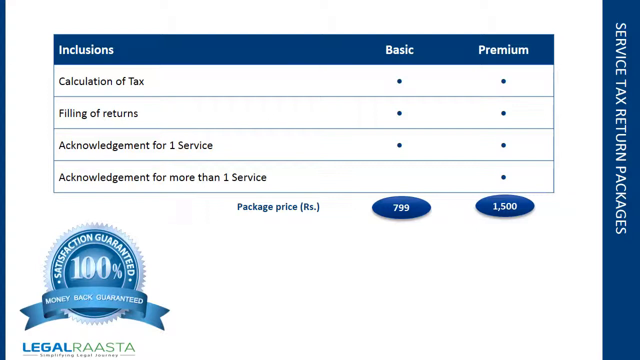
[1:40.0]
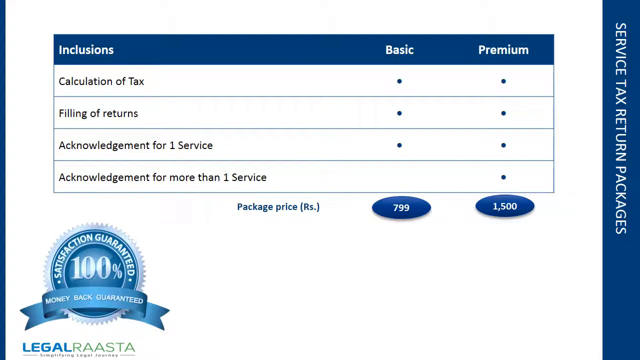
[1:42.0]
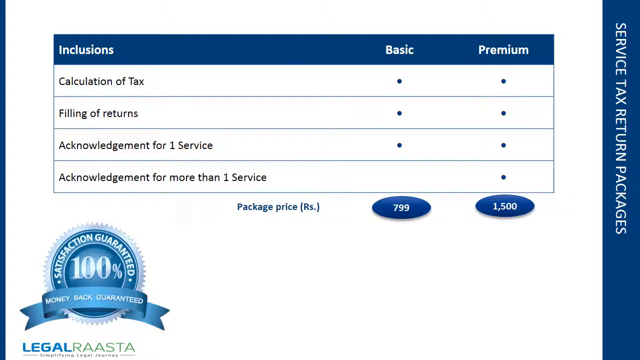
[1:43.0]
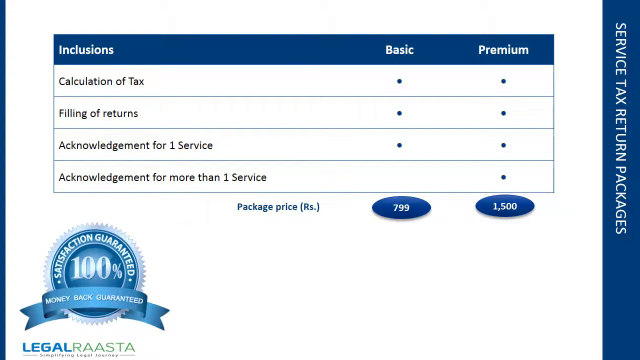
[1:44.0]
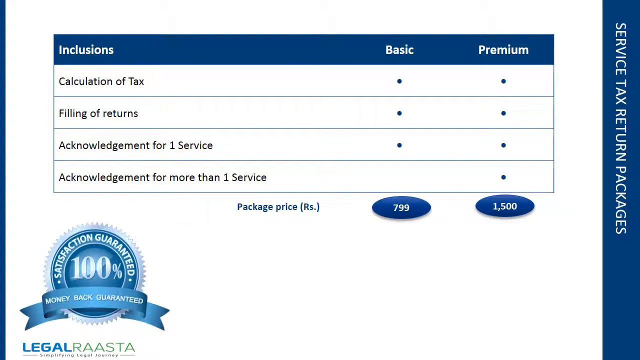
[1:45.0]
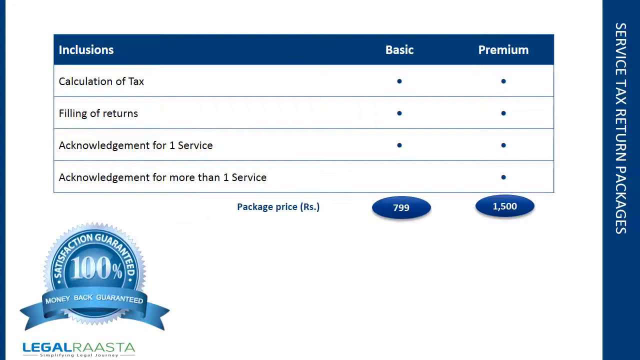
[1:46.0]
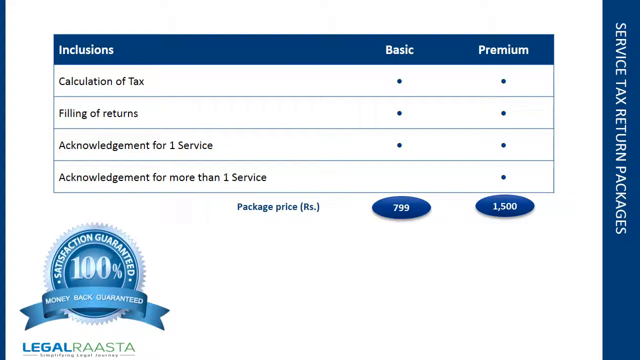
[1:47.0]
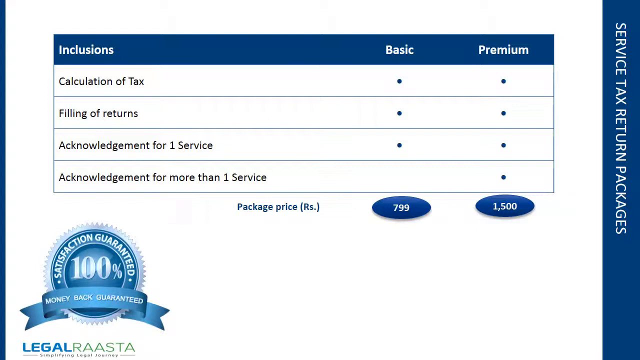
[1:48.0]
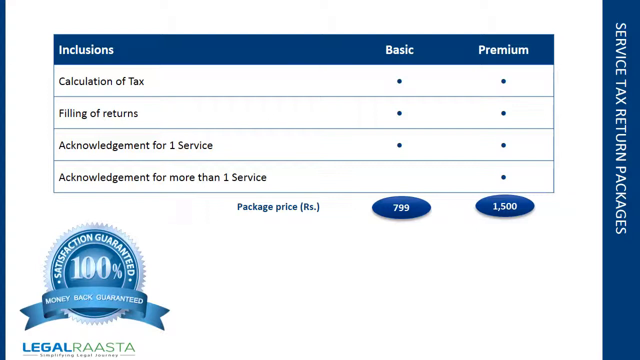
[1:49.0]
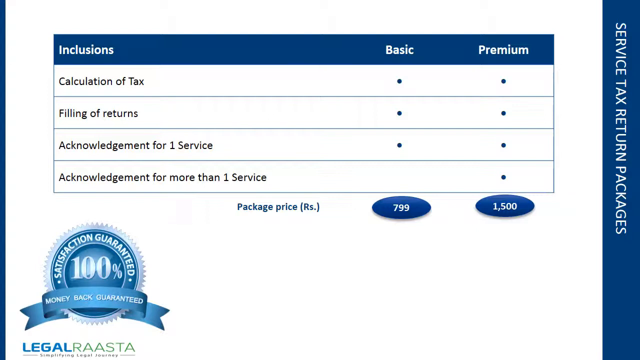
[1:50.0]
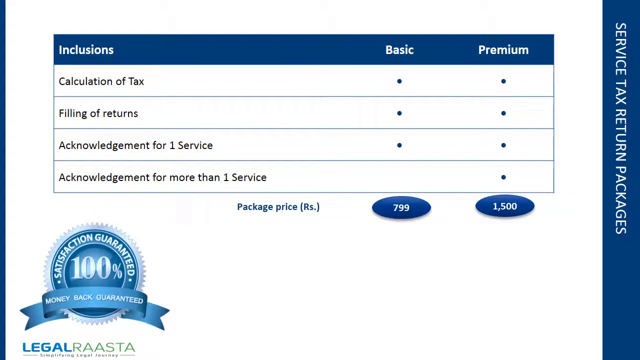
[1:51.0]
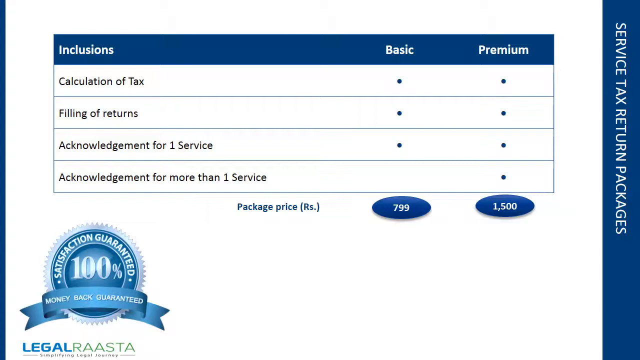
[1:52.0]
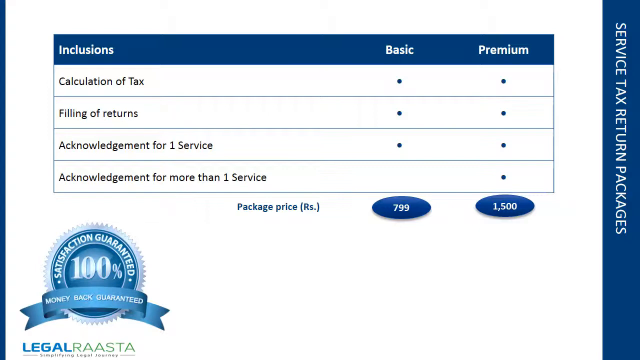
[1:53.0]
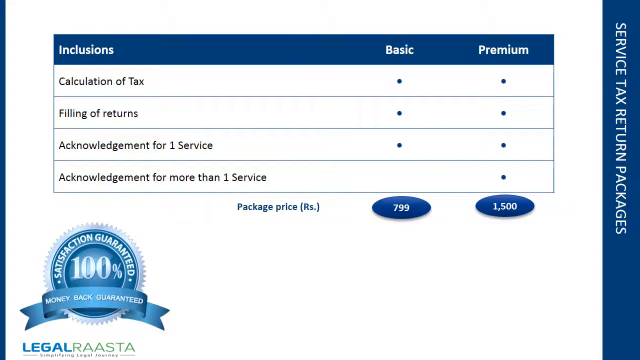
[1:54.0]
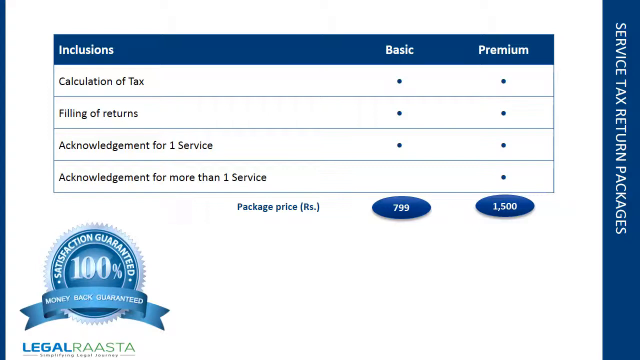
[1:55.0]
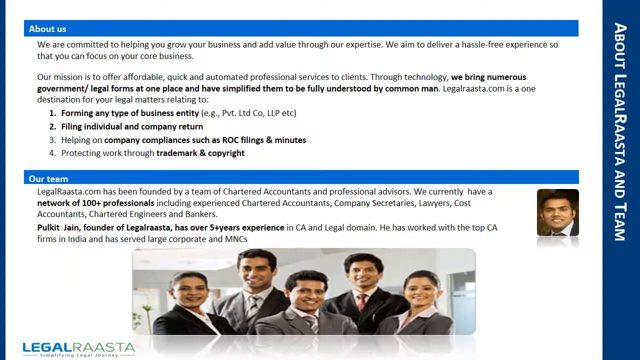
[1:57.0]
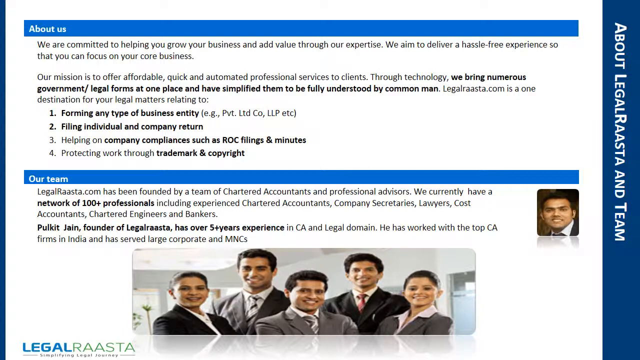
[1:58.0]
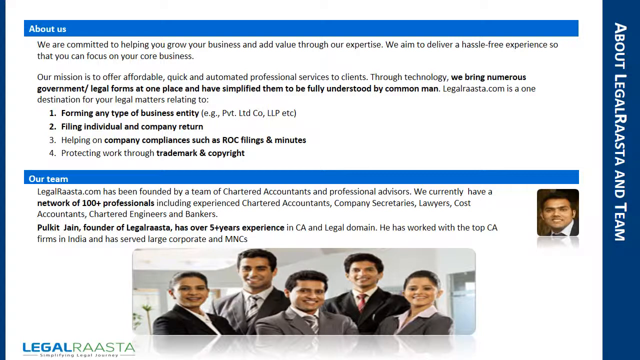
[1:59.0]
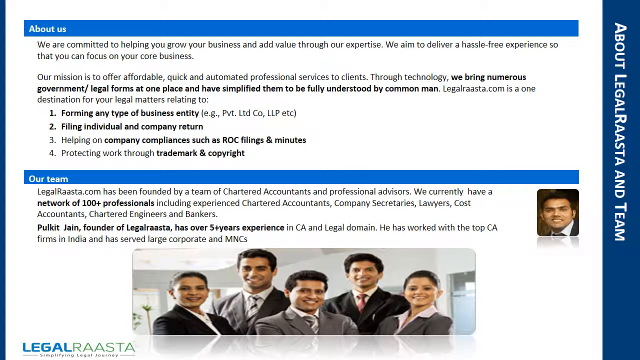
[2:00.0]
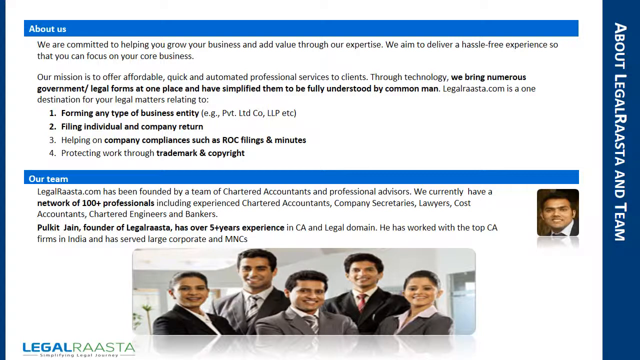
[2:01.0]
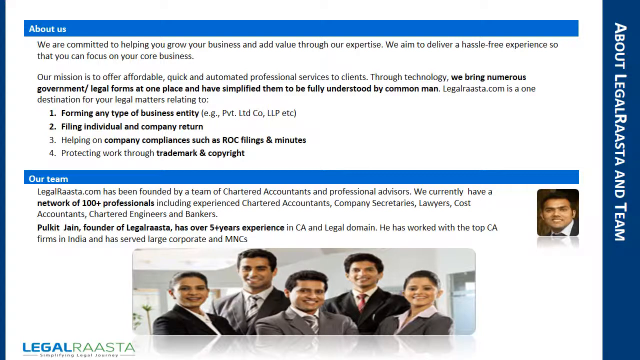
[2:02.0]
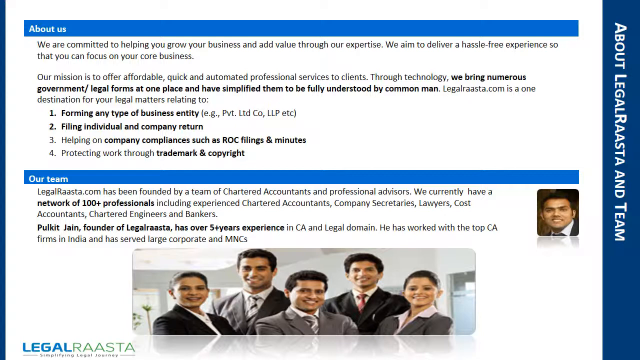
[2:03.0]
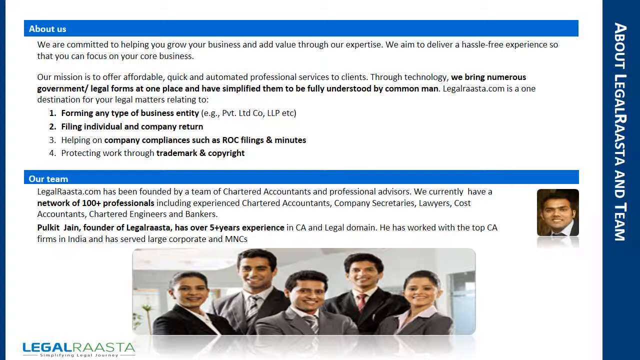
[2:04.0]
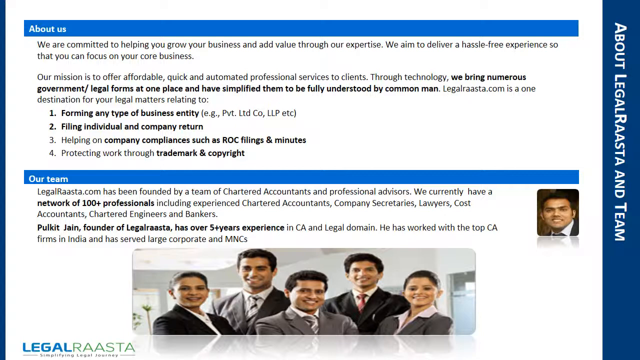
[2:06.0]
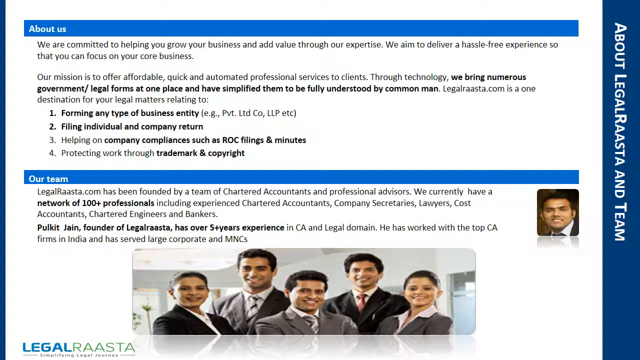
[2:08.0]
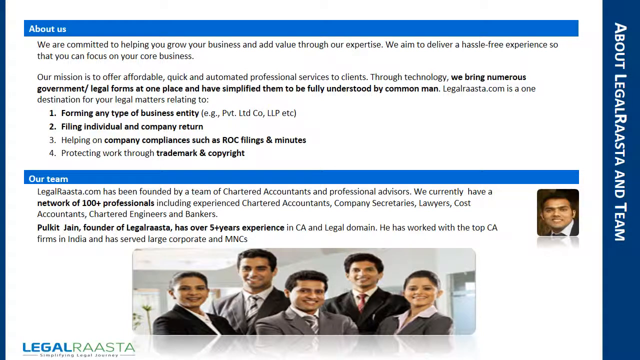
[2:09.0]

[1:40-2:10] A slide with a white background has a dark blue rectangular bar in the right margin with white text, written sideways, reading "Service Tax Return Packages." A chart has a dark blue top row with the white labels "inclusions" on the left and "basic" and "premium" on the right. Below are four rows with white backgrounds. The first row's inclusions column reads "calculation of tax," with a small dark blue circle under basic and premium. The second reads "filing of returns," with a small blue circle under basic and premium. The third reads "acknowledgement for 1 service," with a small black or blue circle under basic and premium. The last reads "Acknowledgement for more than 1 service," with a blue circle only under premium. Beneath the chart it reads "package price" in RS; under the basic column a dark blue sideways oval contains "799" in white font, and under the premium column a dark blue oval reads "1500." In the bottom left corner is a seal of sorts reading "Satisfaction guaranteed a hundred percent money back guaranteed." The next slide has a white background and a dark blue block in the far right margin with white text reading "about legal Raasta and team." At the top, a blue bordered heading box reads "about us" in white, followed by text about the company's mission statement and the kinds of legal matters it can help with. Below that, another blue heading block reads "our team," followed by information about the company's team as a network of 100 plus professionals, including chartered accountants, company secretaries, lawyers, cost accountants, chartered engineers and bankers. There is then some information on the founder of Legal Raasta, Pulkit Jain, with a small headshot to the right showing what looks like a young Indian man wearing a suit. Beneath that is an image of a team of three men and two women, all wearing business professional suits, apparently a group of attorneys posing for a picture.